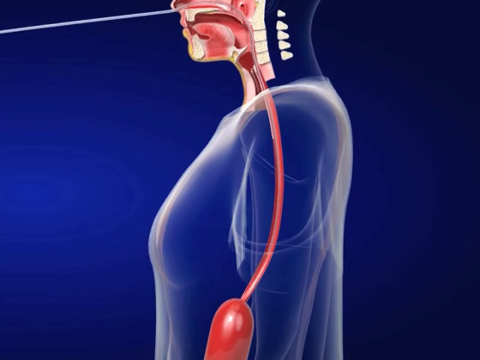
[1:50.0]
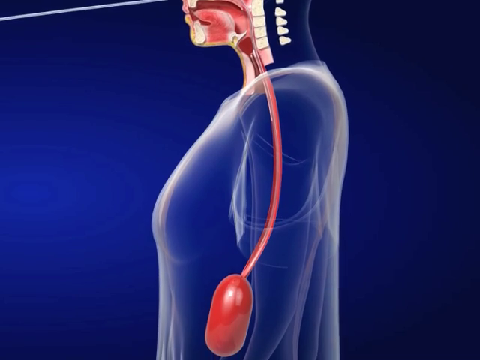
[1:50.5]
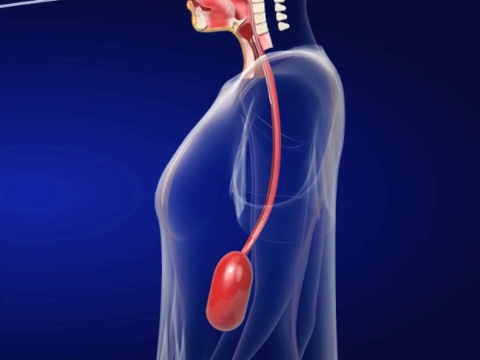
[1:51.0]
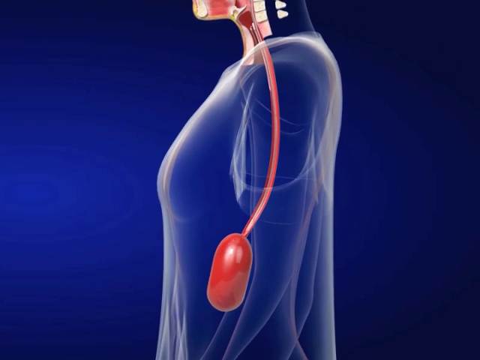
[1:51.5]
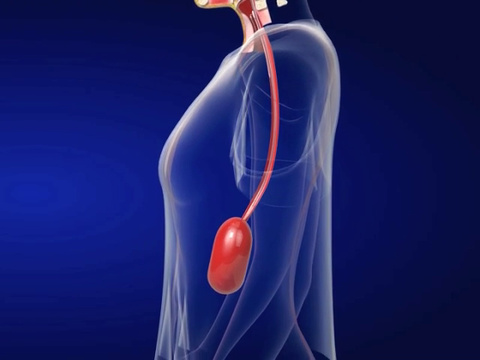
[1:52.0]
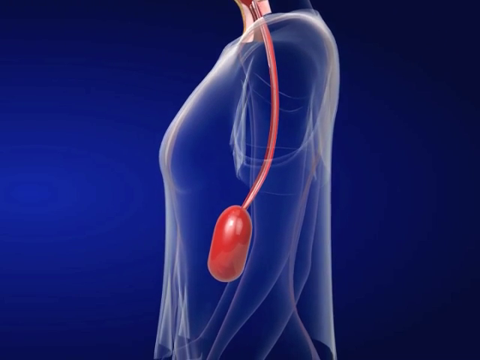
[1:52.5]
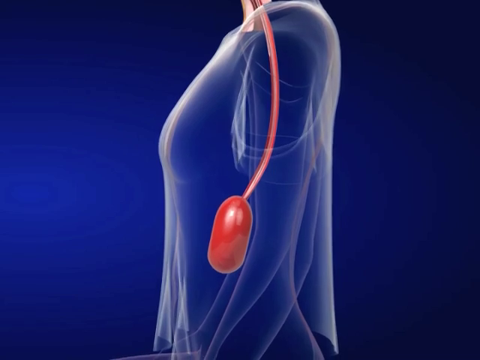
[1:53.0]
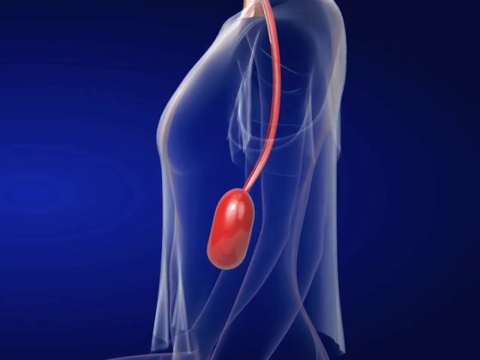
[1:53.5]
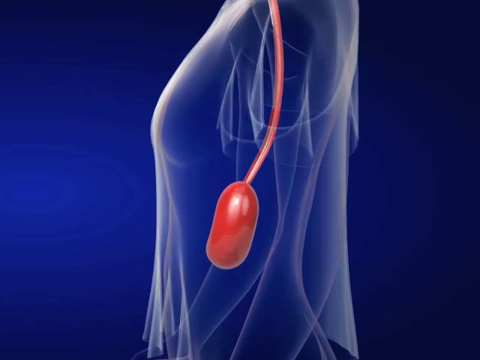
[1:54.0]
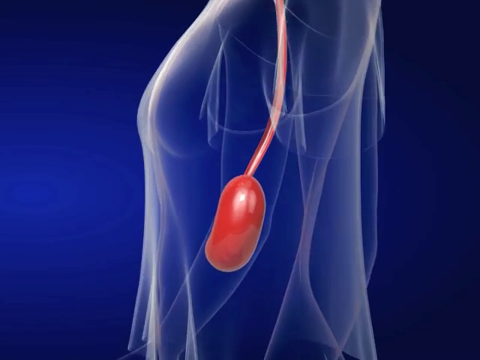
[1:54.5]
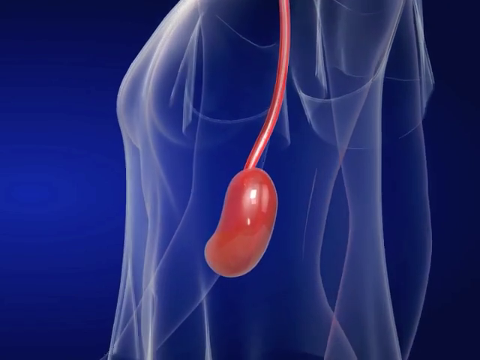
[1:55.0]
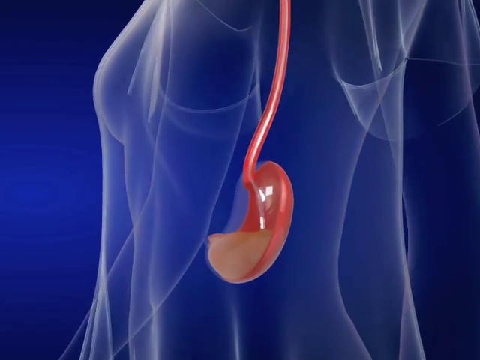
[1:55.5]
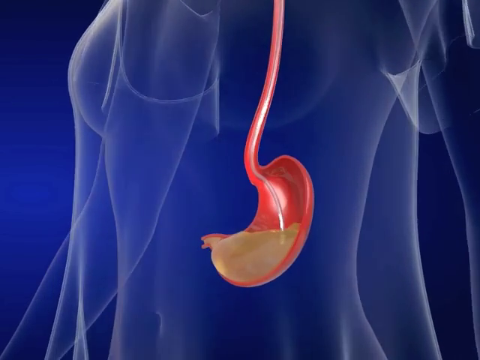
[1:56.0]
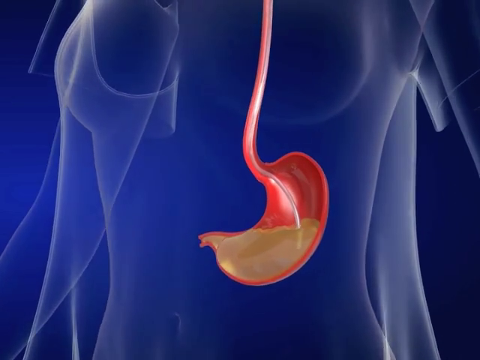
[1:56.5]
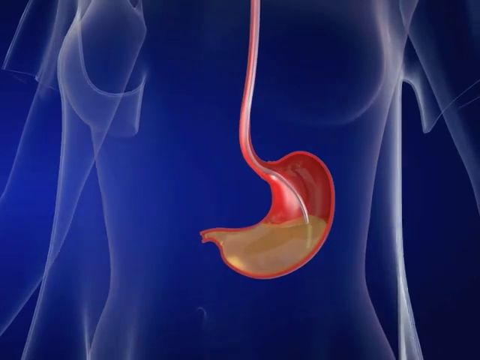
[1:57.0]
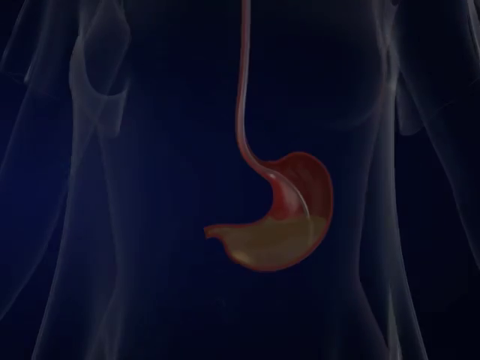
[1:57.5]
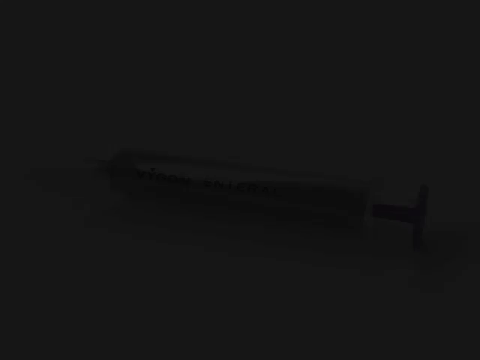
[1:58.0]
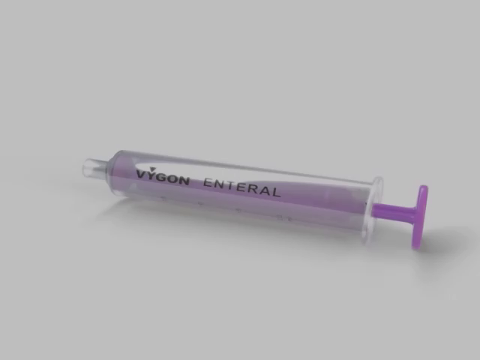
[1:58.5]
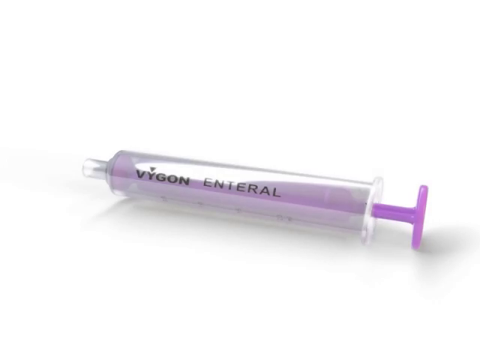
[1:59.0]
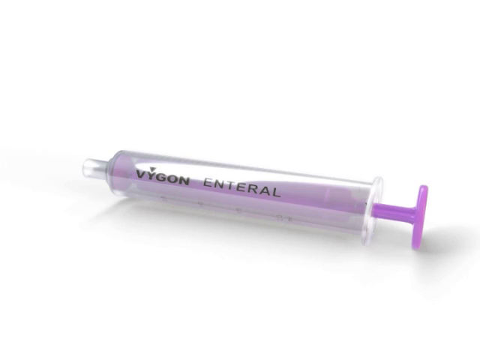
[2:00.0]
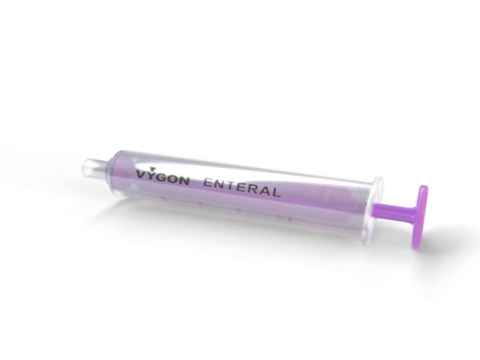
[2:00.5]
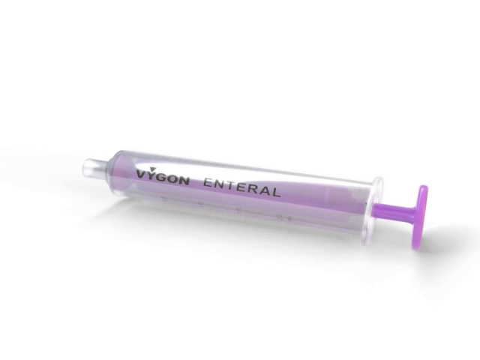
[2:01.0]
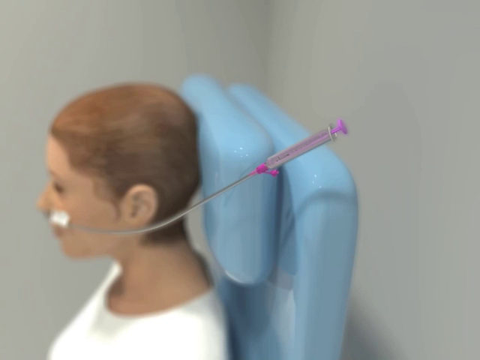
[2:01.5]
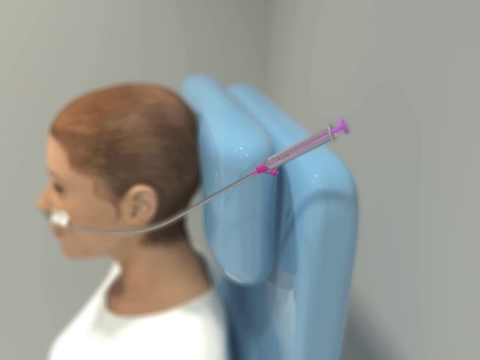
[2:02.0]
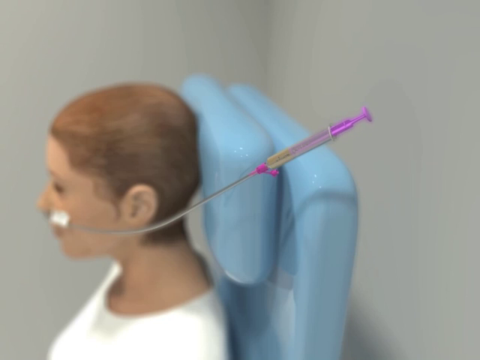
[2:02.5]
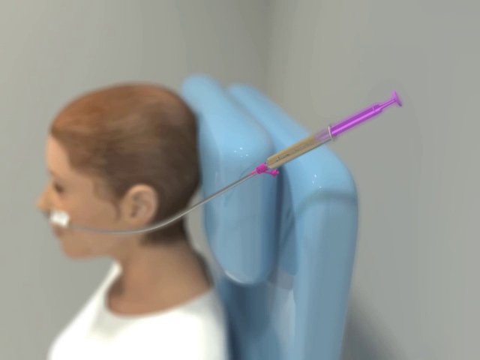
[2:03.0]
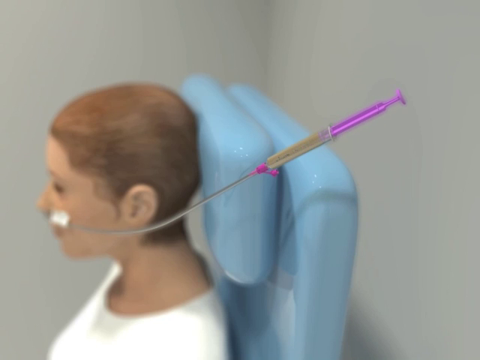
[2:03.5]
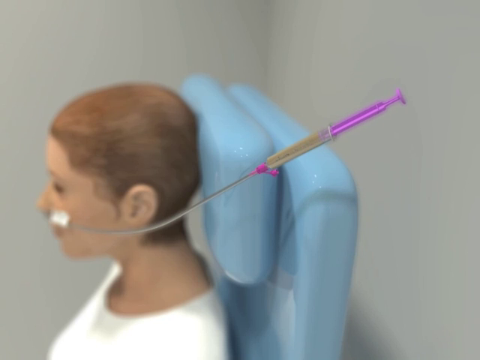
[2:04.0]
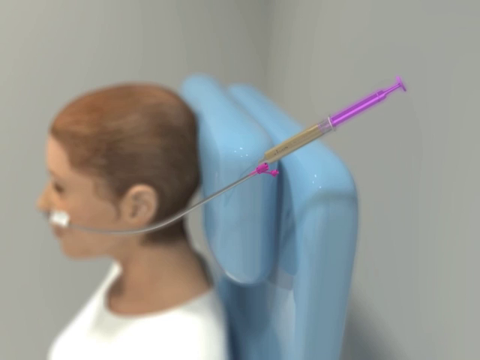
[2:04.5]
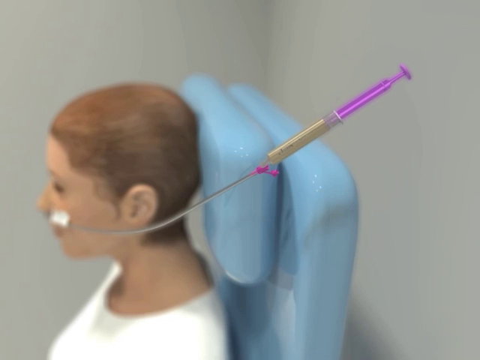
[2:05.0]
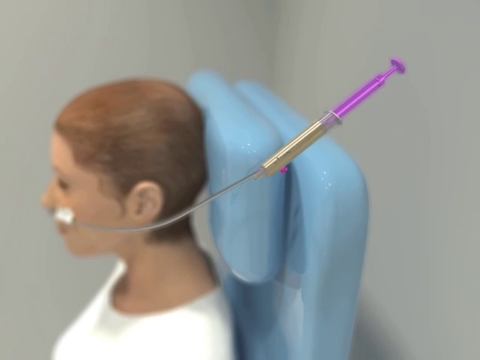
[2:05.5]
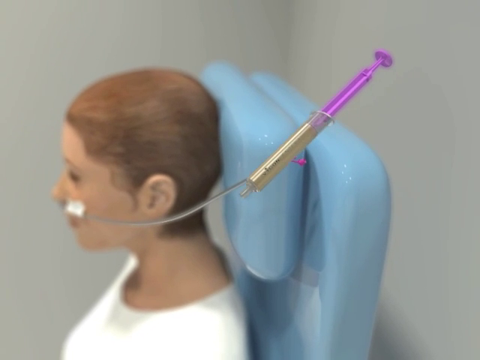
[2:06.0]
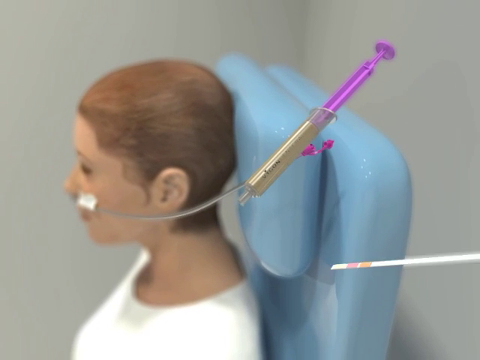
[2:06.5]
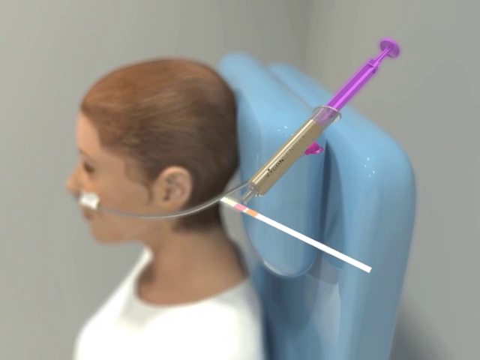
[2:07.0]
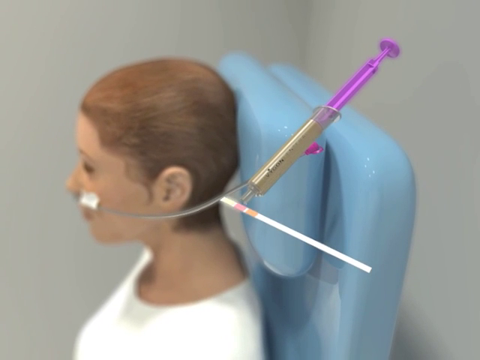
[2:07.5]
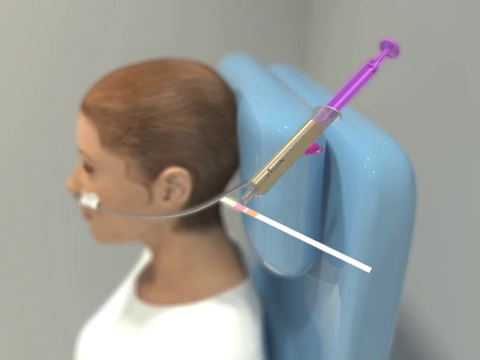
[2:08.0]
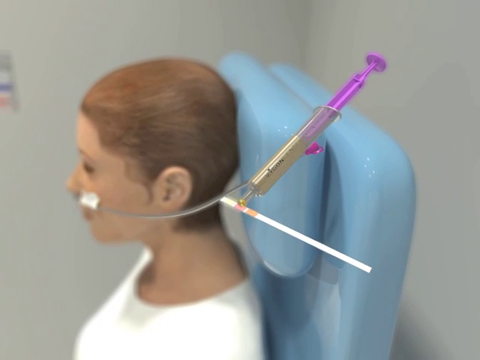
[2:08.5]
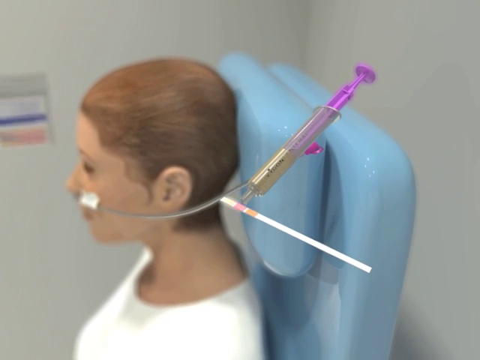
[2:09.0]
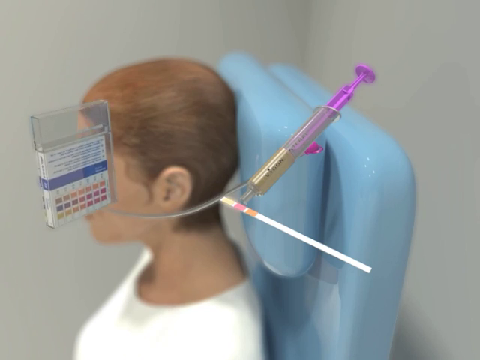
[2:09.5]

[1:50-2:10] A 3D patient silhouette on a blue background is viewed from the patient's left, and the patient is wearing a shirt. The view runs from the bottom of the nose down to the upper torso, with some of the facial anatomy shown in cross-section. The esophagus and stomach are pinkish red. The grayish-clear Vygon tube enters the patient's nose and goes down the esophagus toward the stomach. The image zooms out a little, showing a more inferior view of the patient as the tube extends into the stomach. It zooms in again and the patient rotates to the left, showing more of the front of the patient. A cross-section of the esophagus and stomach shows the tube in the stomach, its bottom end in yellowish-brown stomach fluid. The video slowly fades to black.